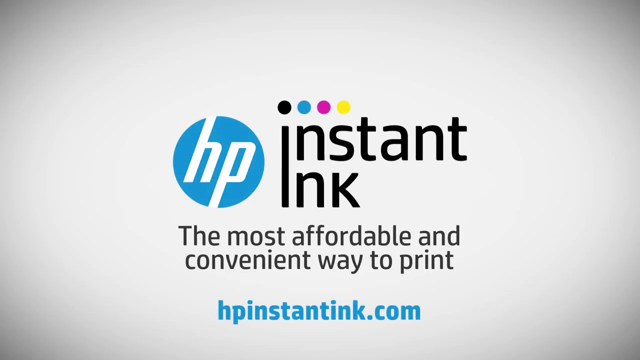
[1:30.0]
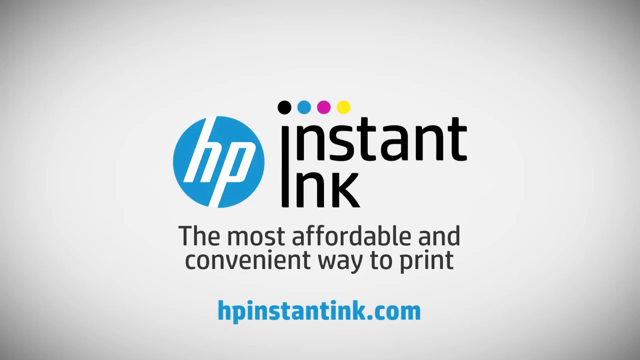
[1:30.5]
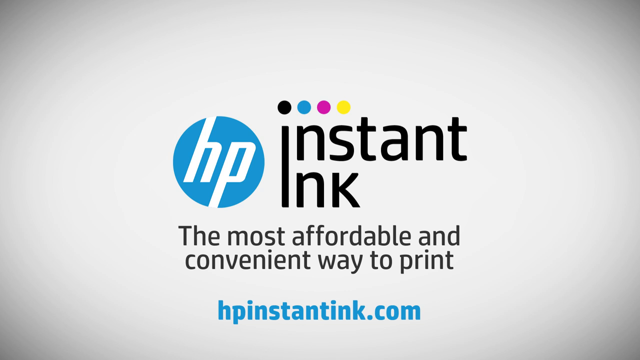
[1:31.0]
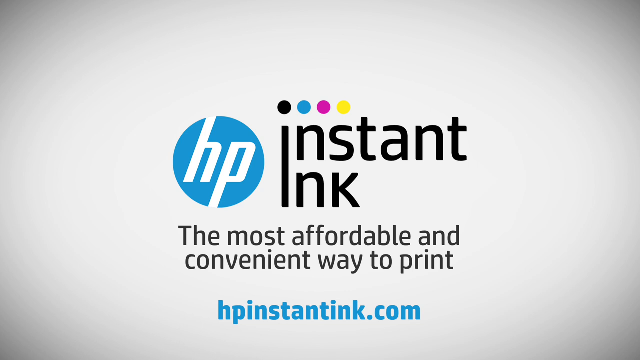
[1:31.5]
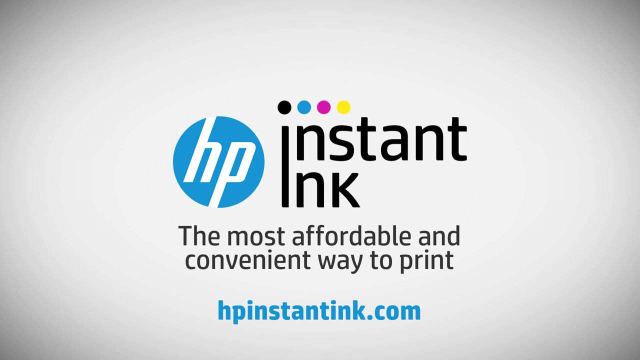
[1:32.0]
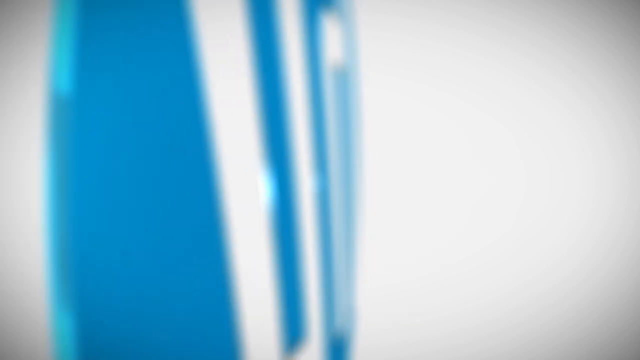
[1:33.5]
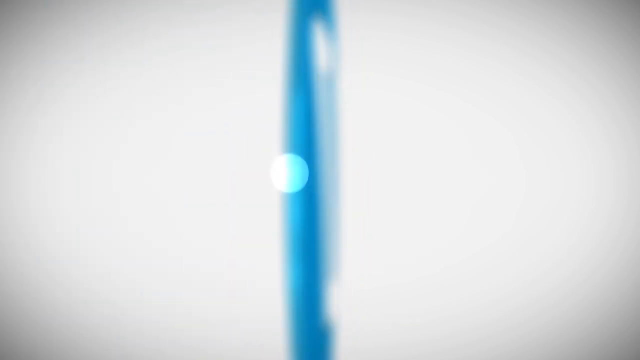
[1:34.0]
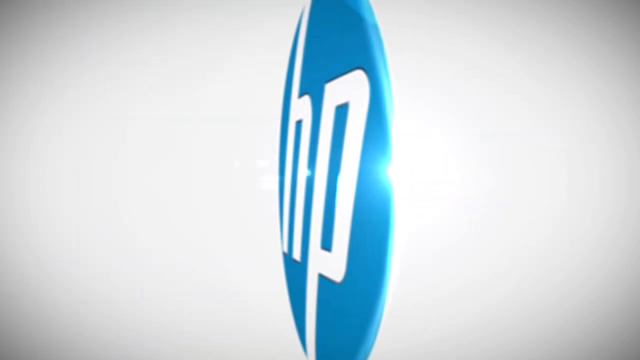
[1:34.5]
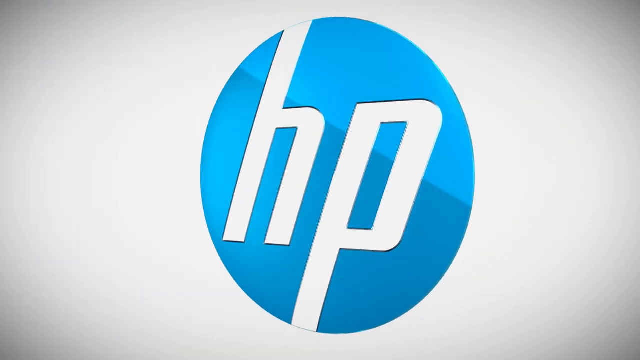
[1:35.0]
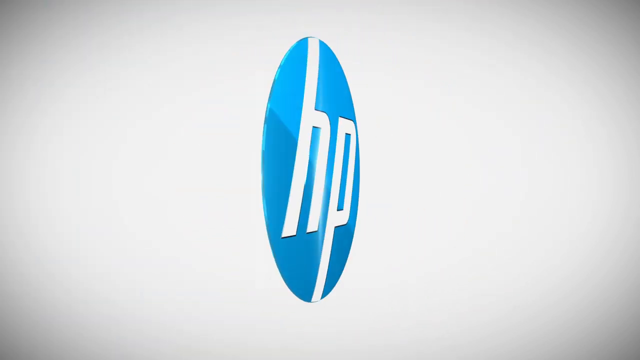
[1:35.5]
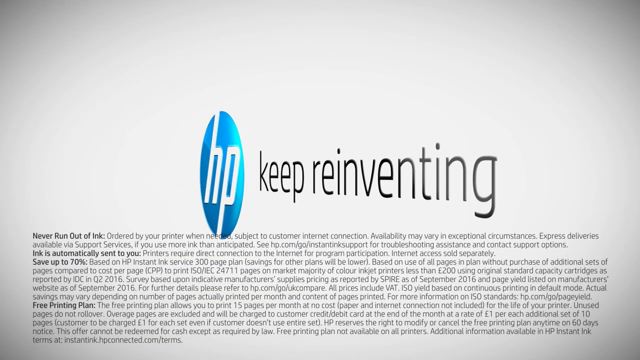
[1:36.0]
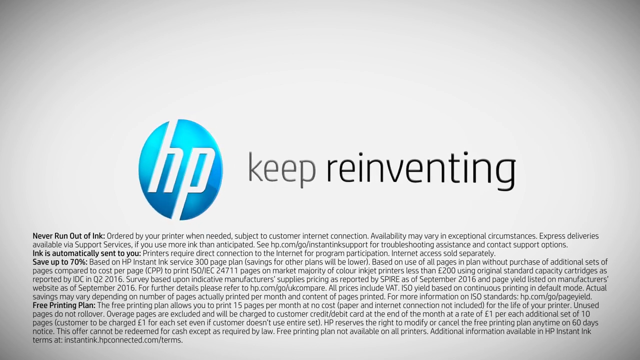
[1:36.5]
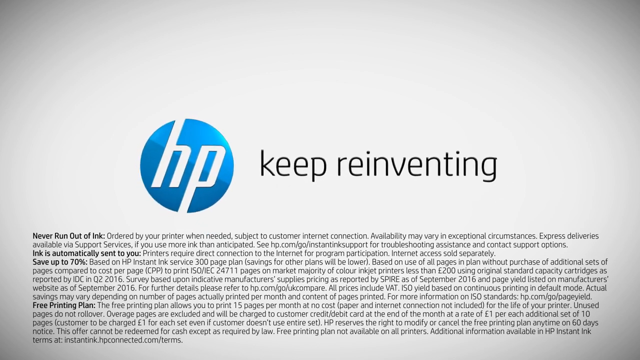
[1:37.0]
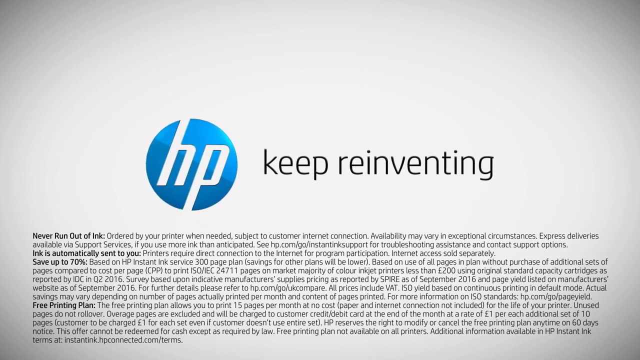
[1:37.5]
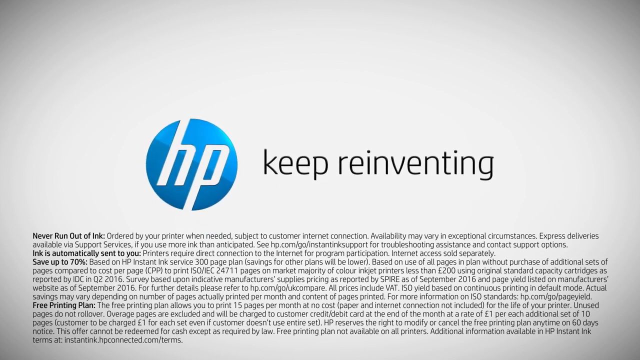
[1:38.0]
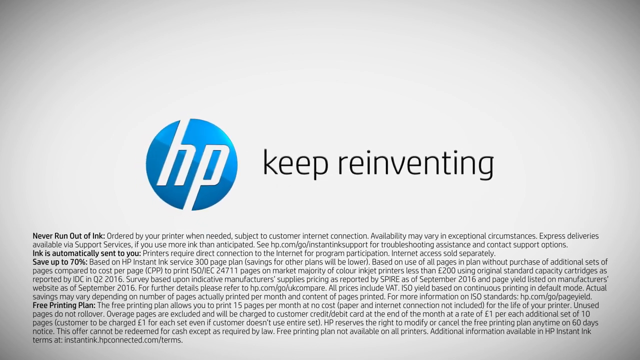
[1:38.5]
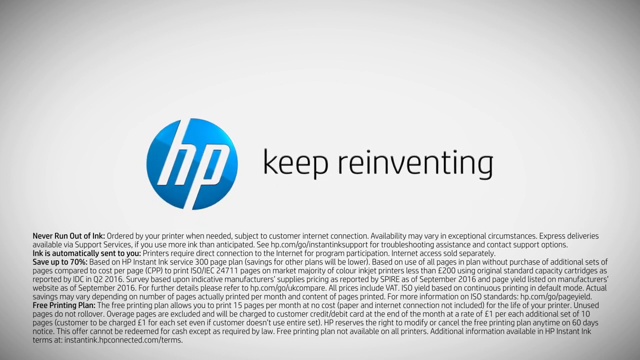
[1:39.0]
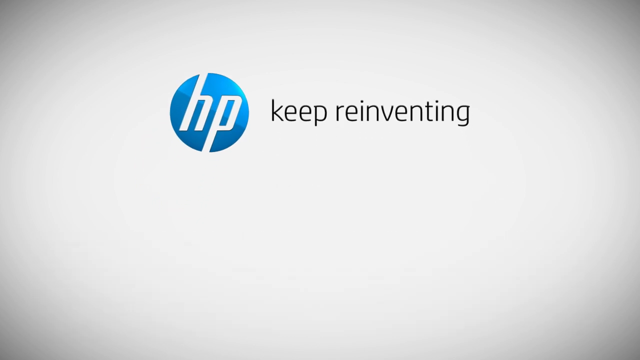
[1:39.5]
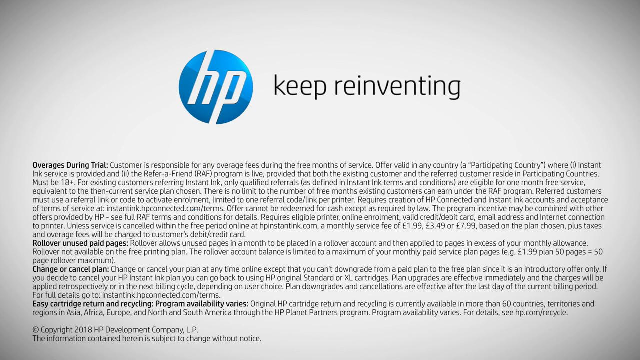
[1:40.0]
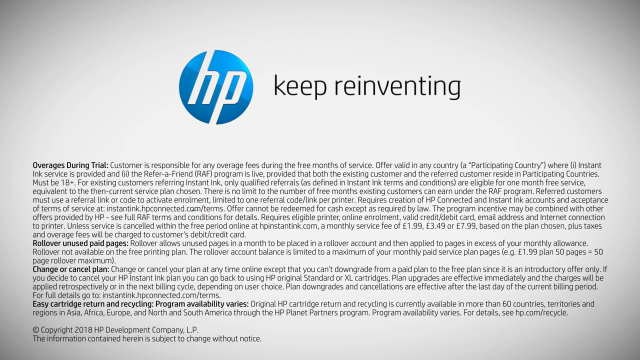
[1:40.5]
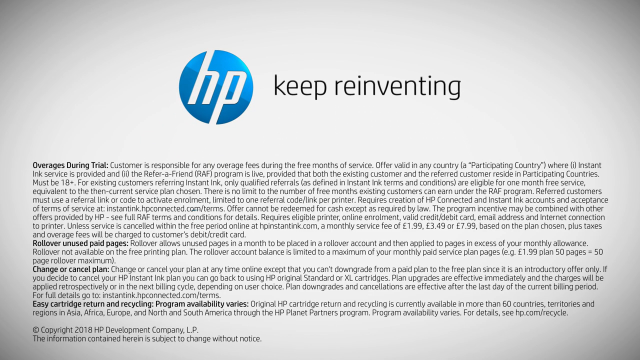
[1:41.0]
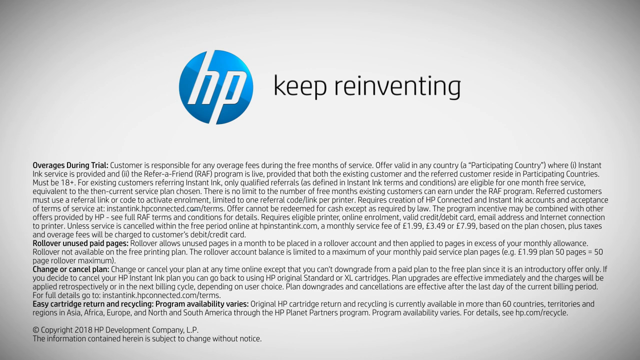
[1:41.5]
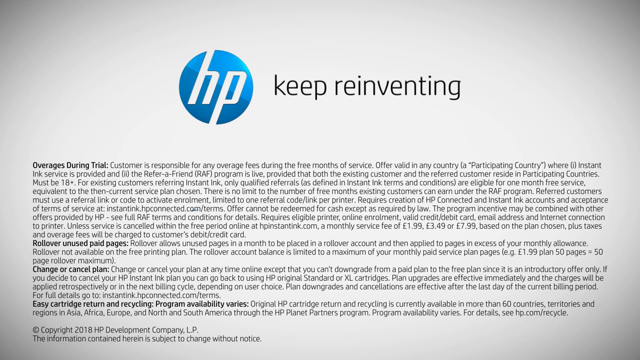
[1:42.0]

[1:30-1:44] The HP and Instant Ink logo appears, followed by the HP logo in circular motion, which ends the video with the words "keep reinventing". Fine print in a small font then appears at the bottom, stating that people should never run out of ink, that ink is automatically sent, that they can save up to 70%, and that they can roll over unused pages, change or cancel a plan, or cover overages during the trial, subject to terms and conditions.